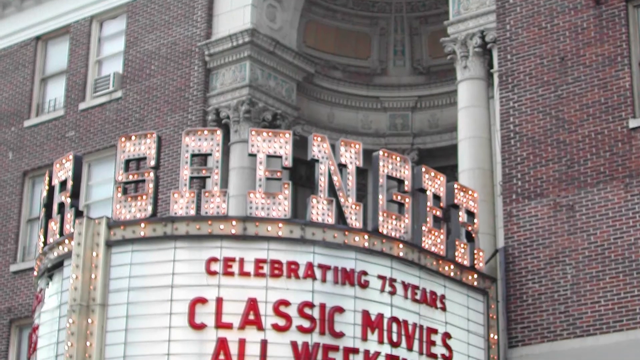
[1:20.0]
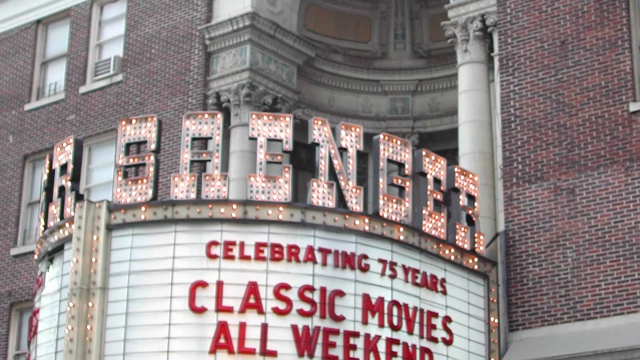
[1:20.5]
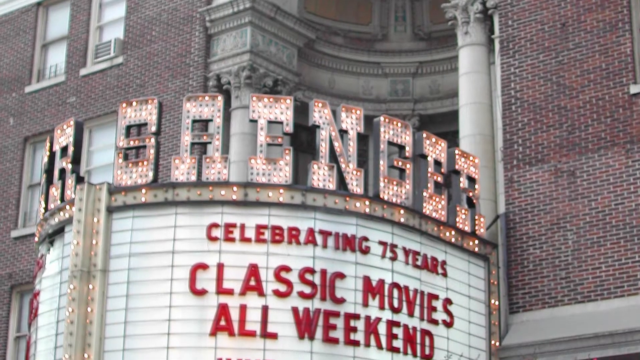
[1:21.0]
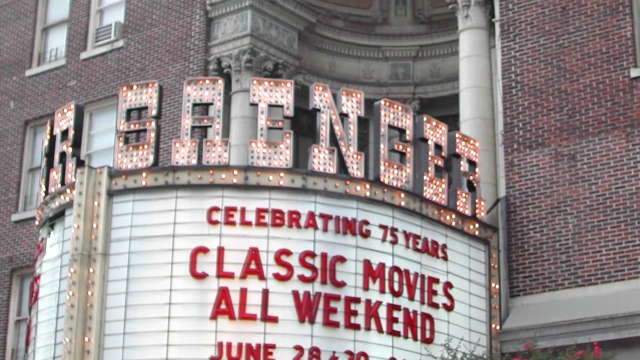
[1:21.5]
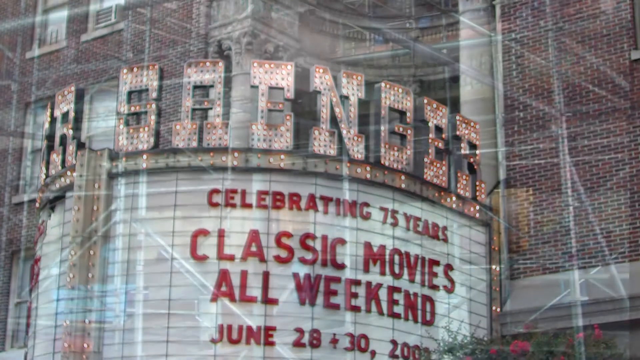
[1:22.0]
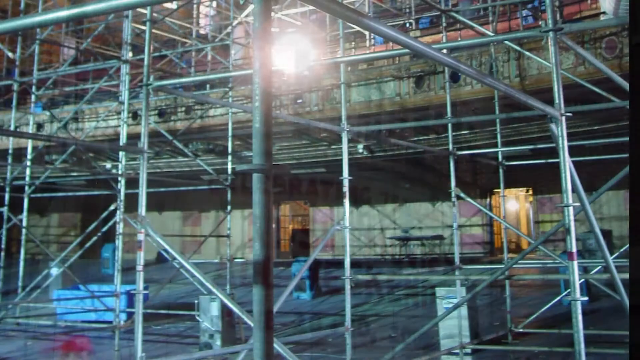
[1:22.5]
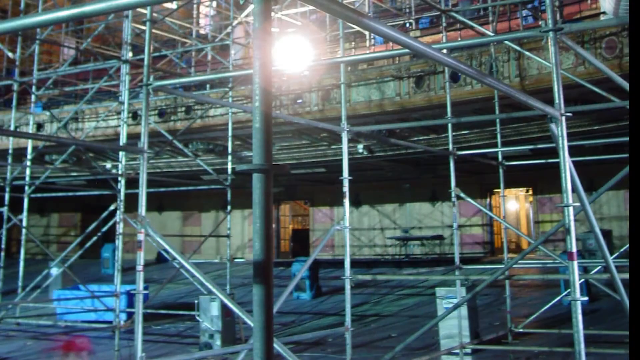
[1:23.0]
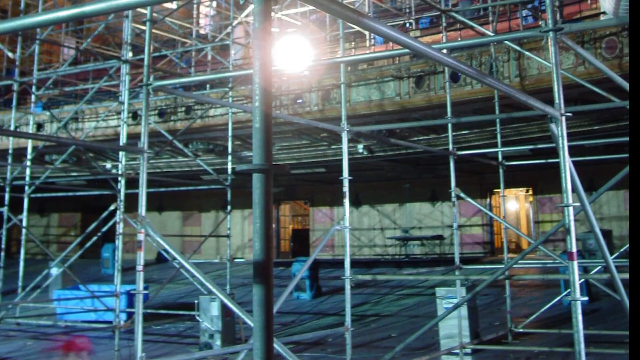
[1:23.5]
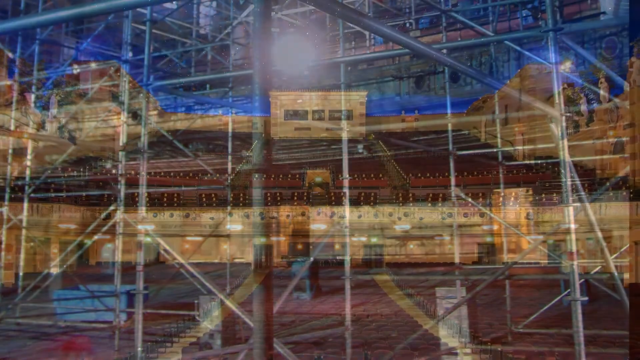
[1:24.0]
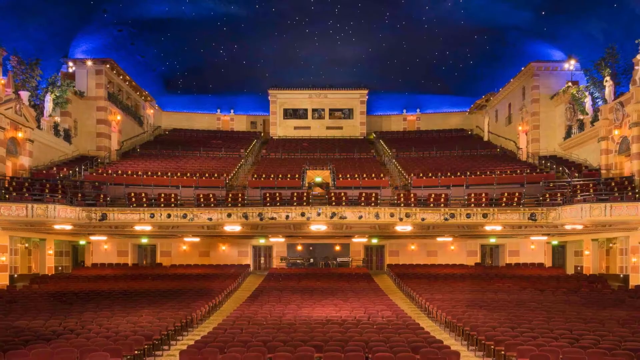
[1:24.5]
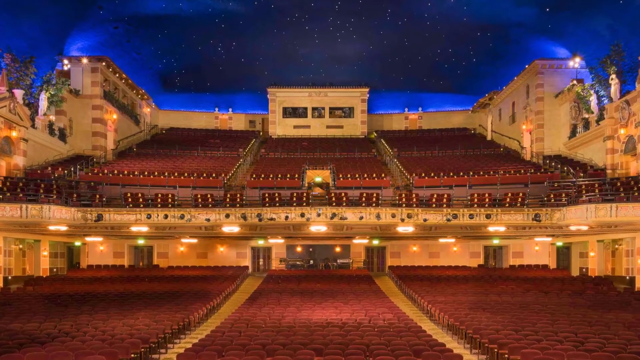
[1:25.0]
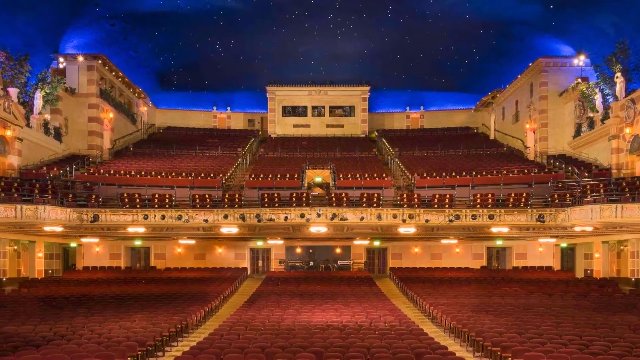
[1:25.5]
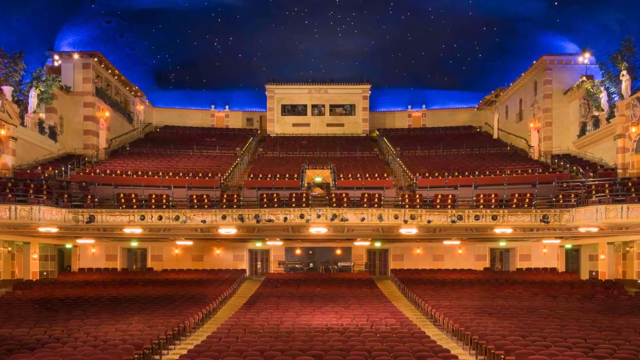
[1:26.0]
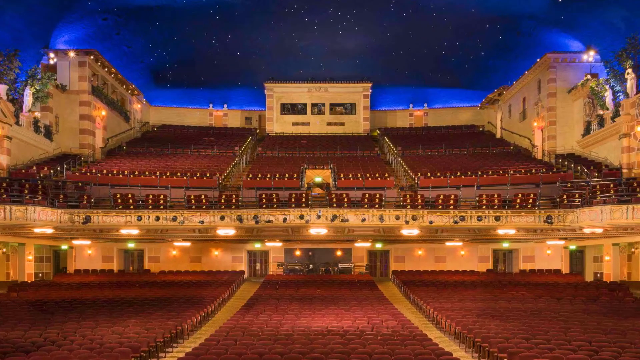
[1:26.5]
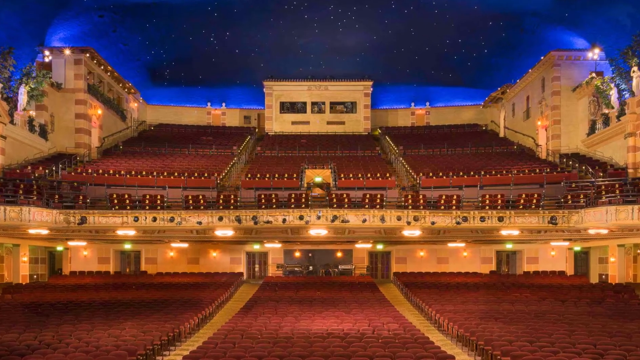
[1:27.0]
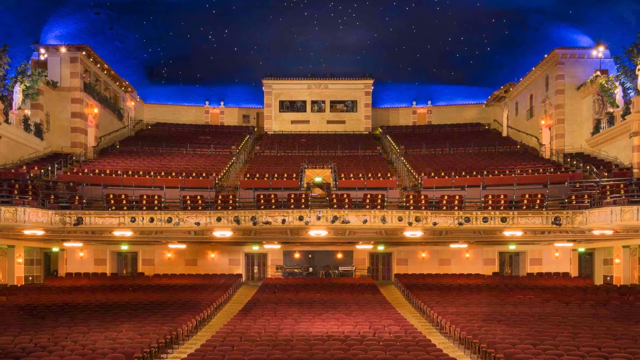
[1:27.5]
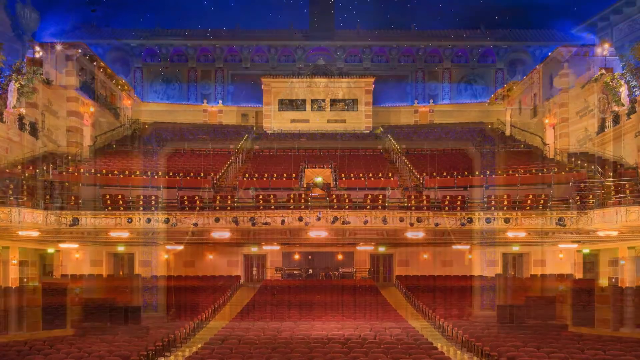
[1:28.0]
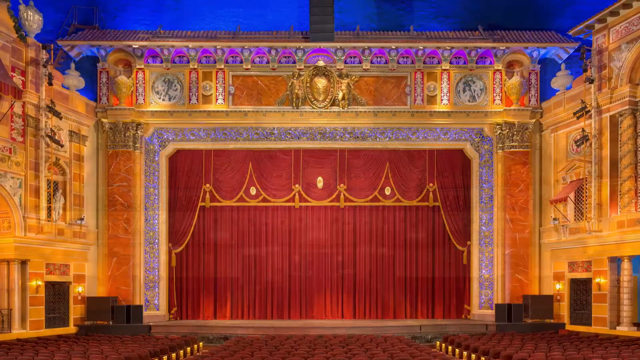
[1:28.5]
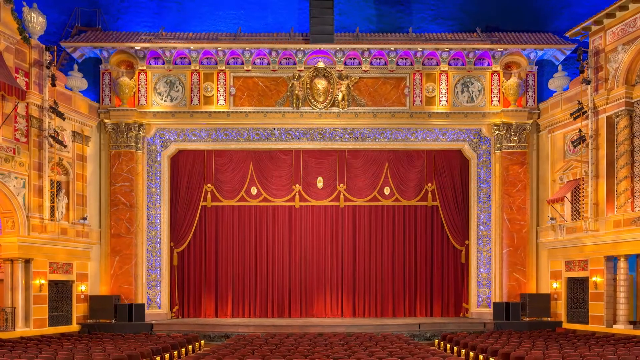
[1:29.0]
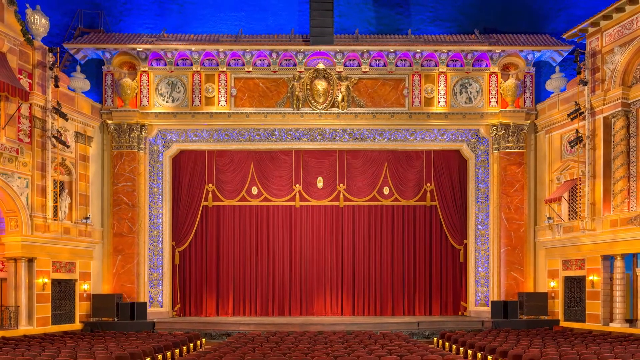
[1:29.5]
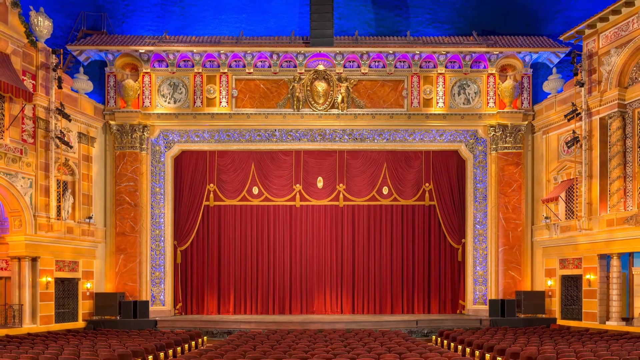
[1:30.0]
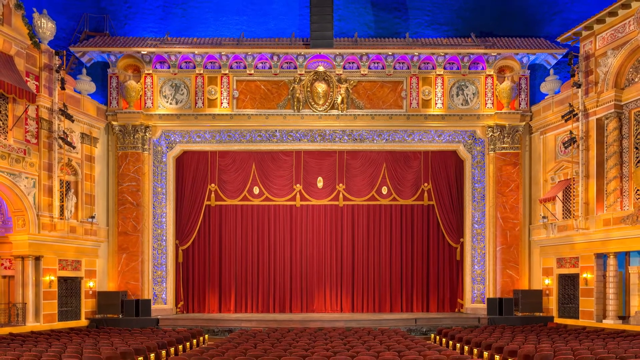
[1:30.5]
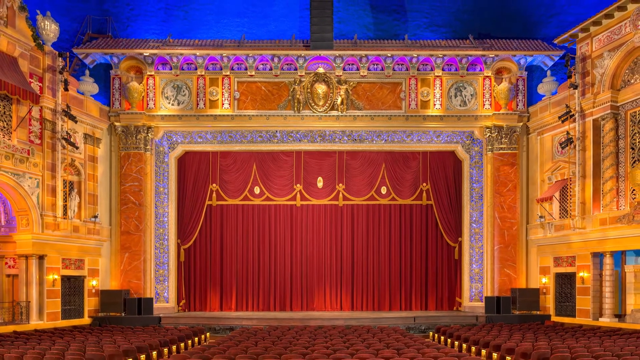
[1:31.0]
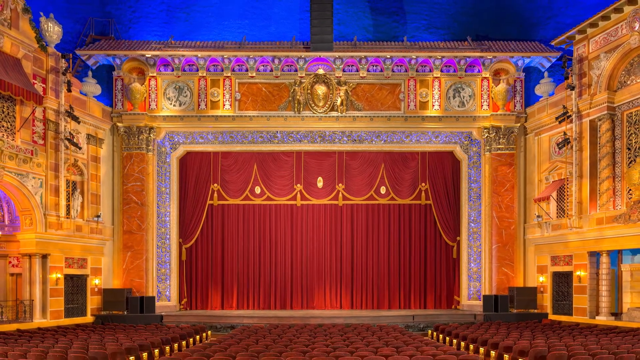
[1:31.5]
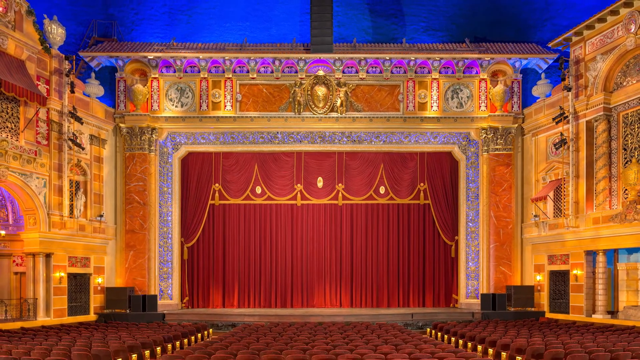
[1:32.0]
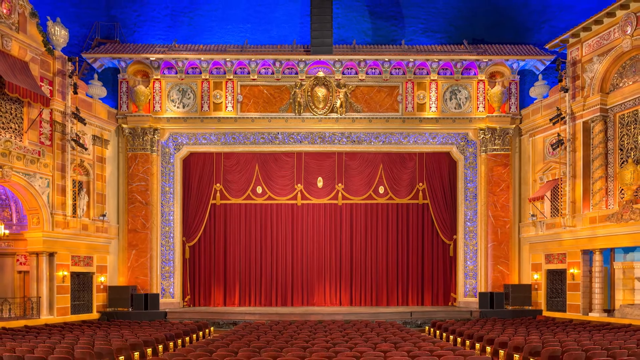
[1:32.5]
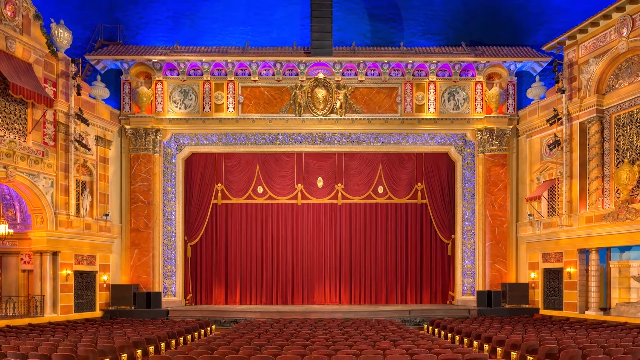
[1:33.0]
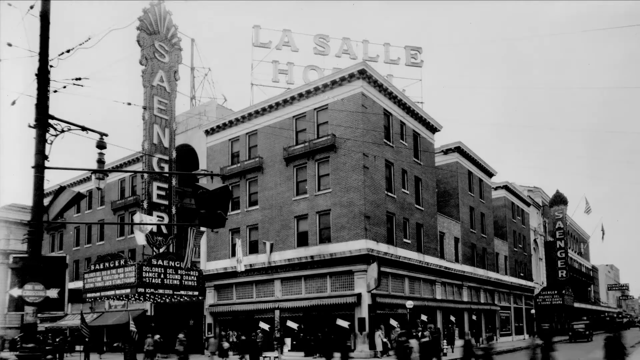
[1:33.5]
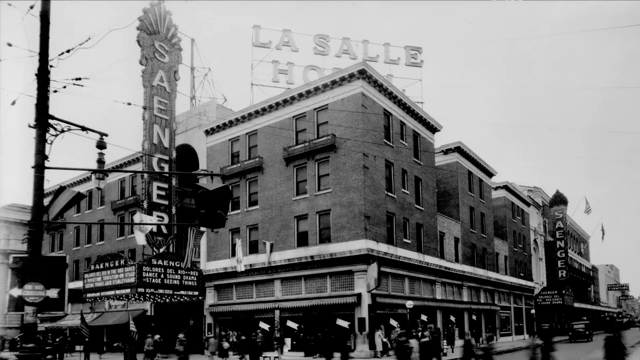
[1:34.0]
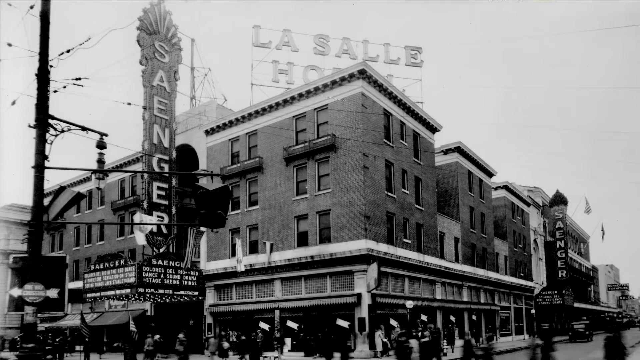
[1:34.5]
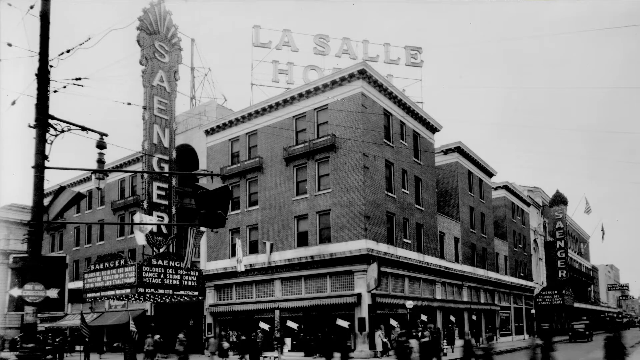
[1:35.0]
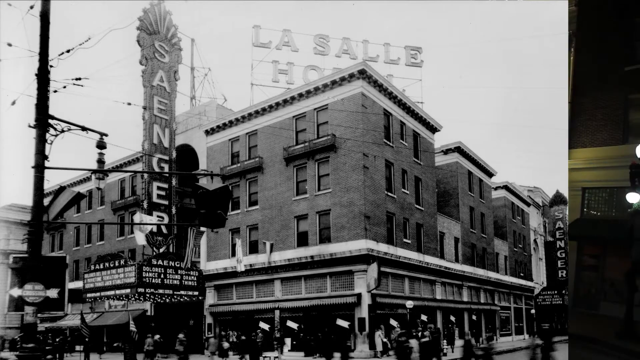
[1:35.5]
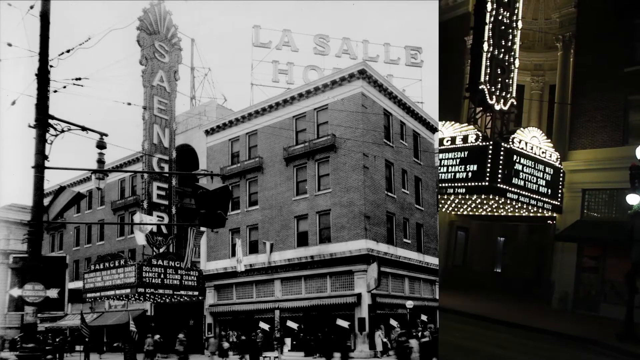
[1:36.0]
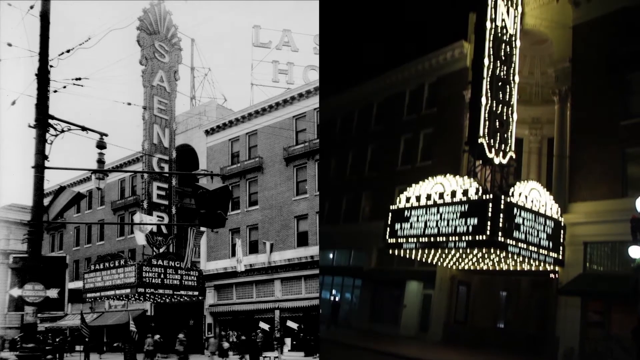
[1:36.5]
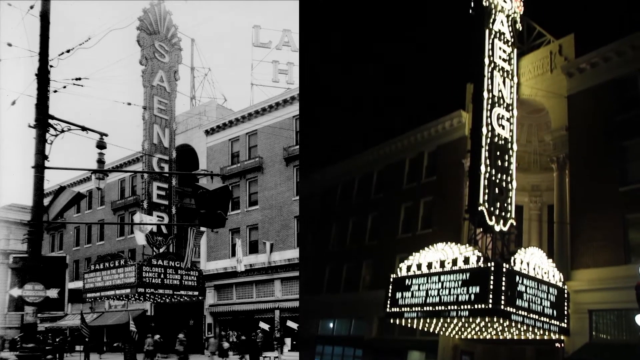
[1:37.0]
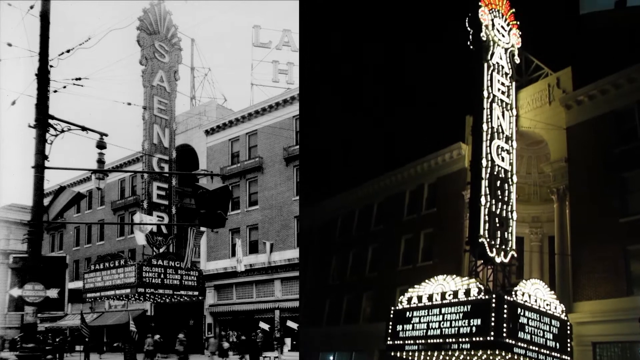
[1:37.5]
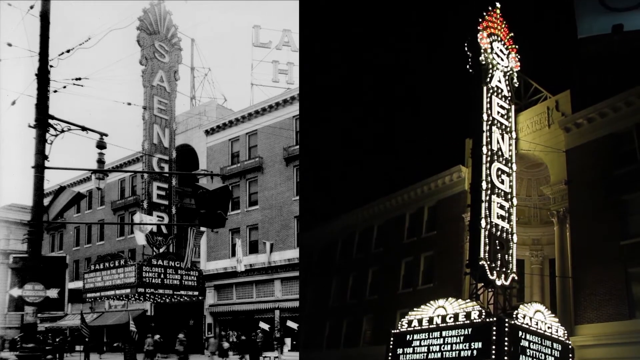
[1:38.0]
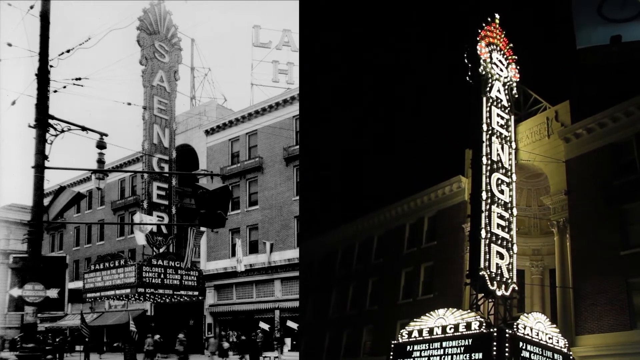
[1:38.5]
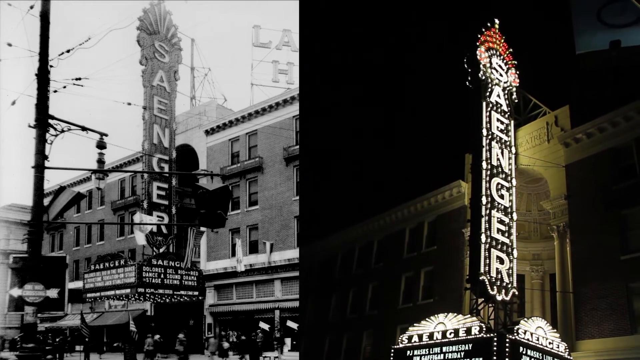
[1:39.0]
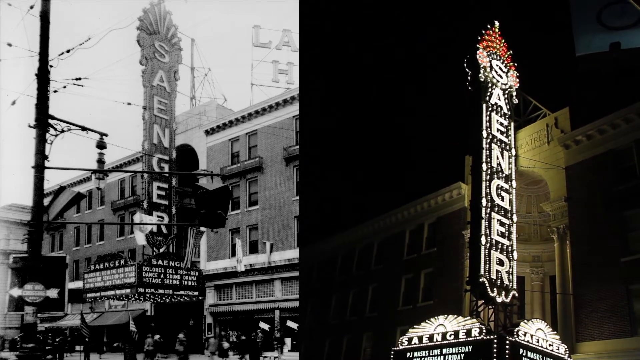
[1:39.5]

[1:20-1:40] On top of a building, "Saenger" is written in LED lights. Next, "celebrating 5 years of classical music all weekend" appears written in red, followed by the production of how things are set up in the theater. A big theater with bright lights and great chairs looks neat and well designed. The stage has a lot of gold, with red curtains bearing a gold design. The view goes back outside the Saenger building, where a sign at the top of the building reads "La Salle," with the other word not really visible. The Saenger sign is then shown again when it is dark outside and the lights are on.